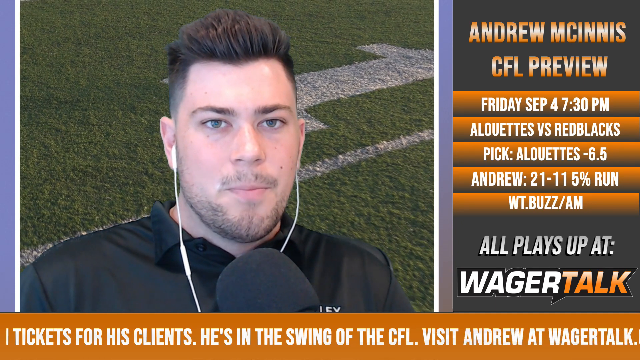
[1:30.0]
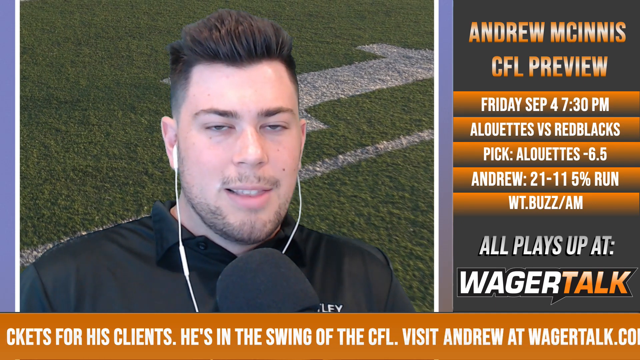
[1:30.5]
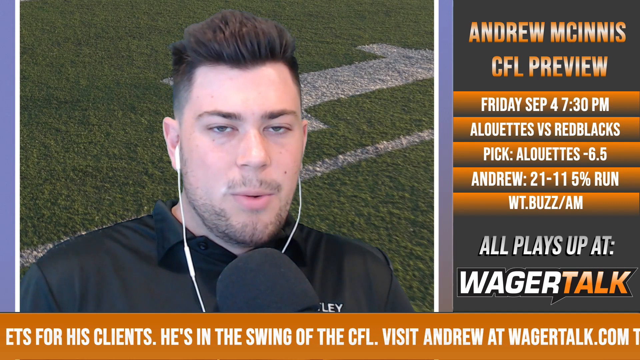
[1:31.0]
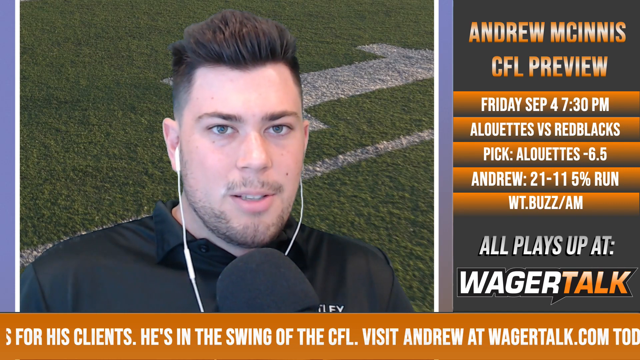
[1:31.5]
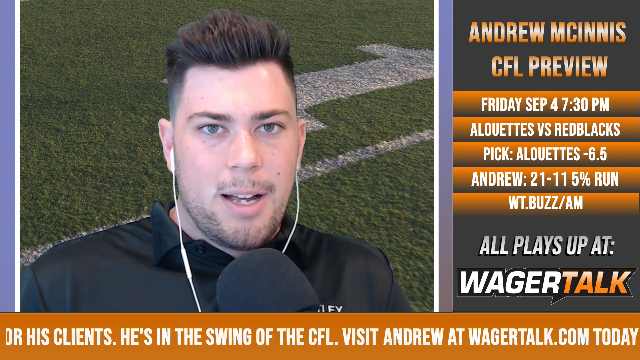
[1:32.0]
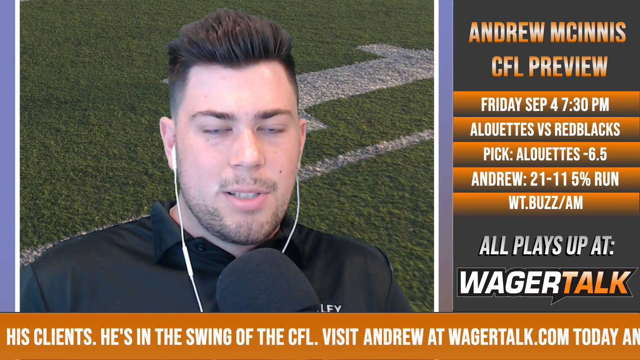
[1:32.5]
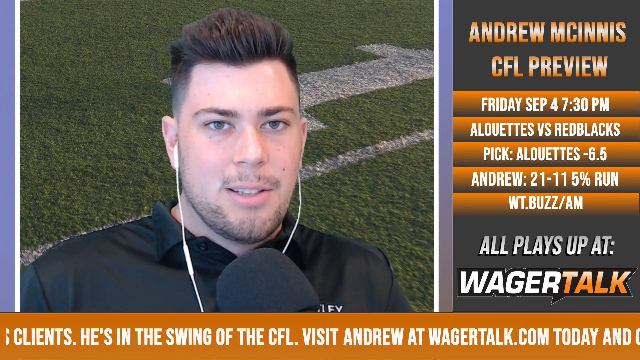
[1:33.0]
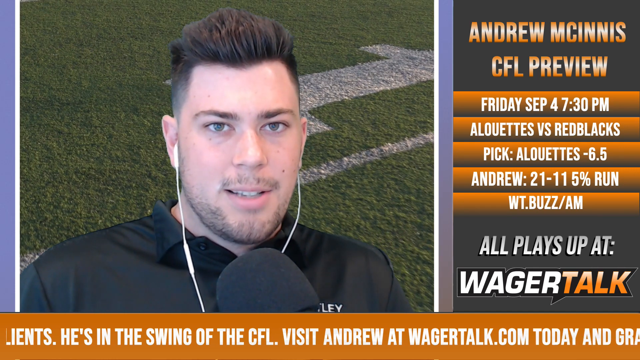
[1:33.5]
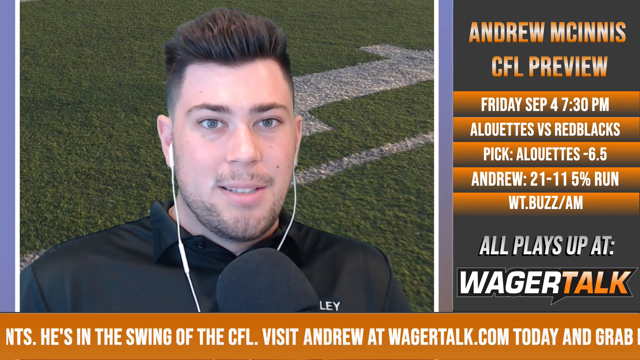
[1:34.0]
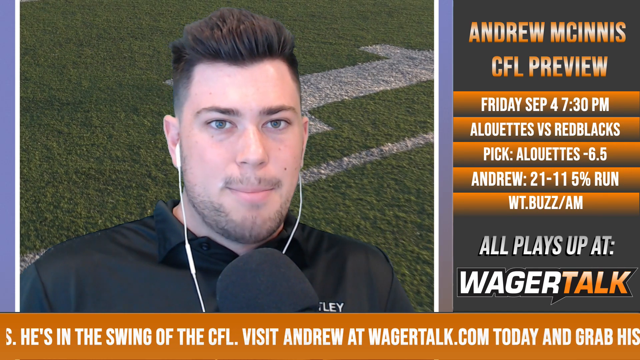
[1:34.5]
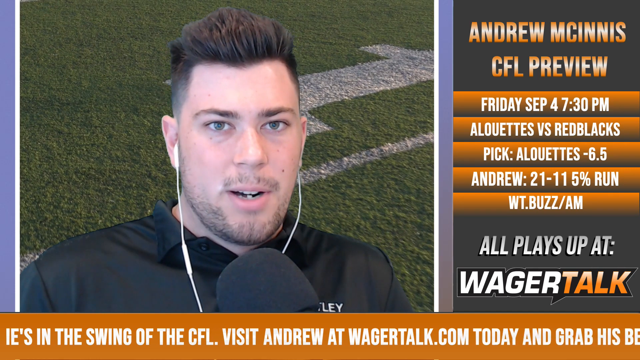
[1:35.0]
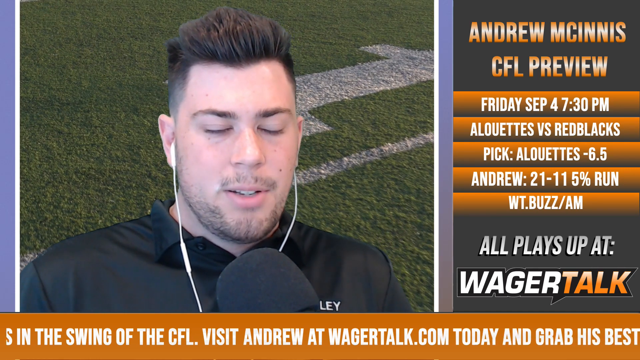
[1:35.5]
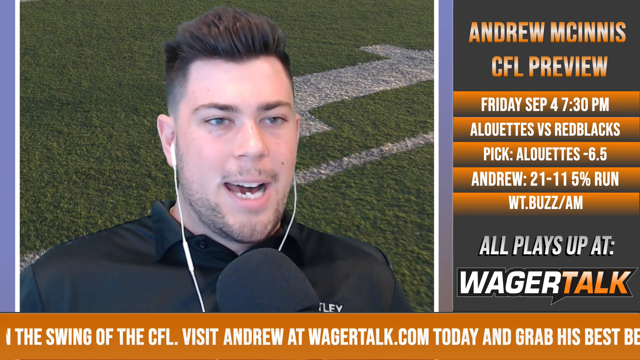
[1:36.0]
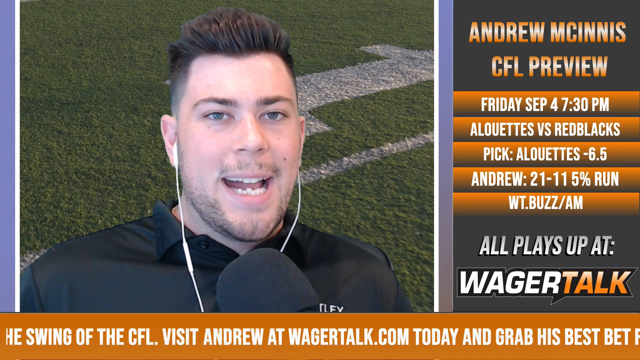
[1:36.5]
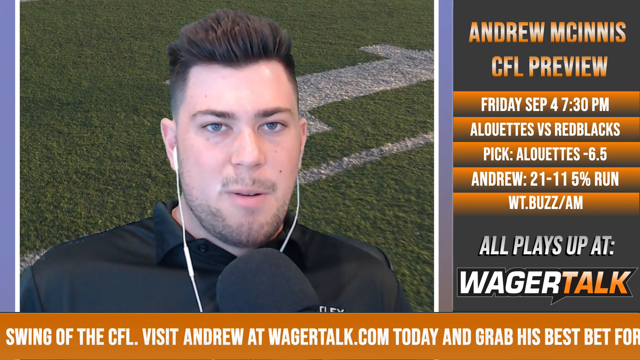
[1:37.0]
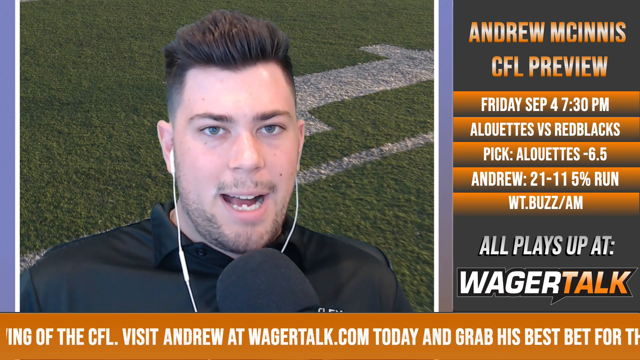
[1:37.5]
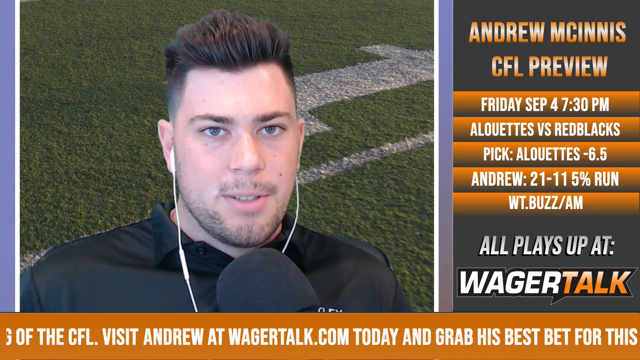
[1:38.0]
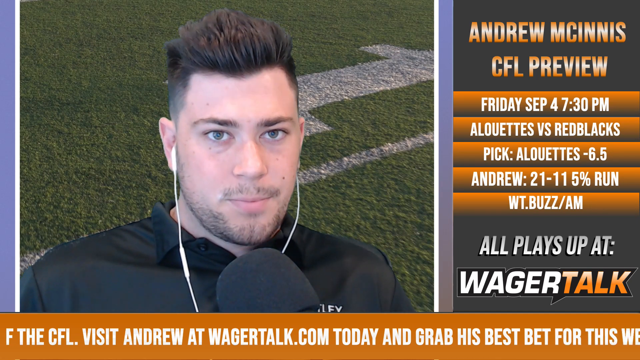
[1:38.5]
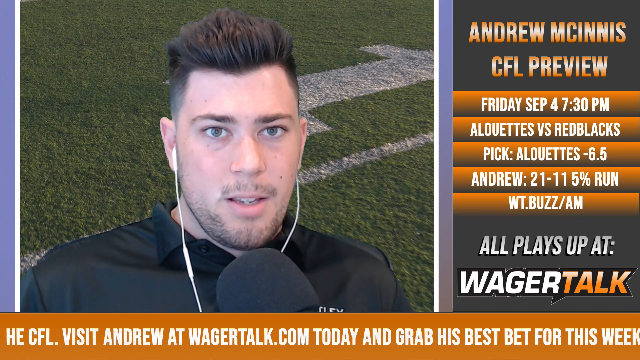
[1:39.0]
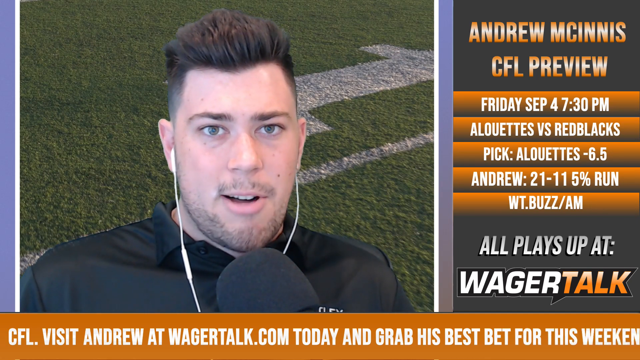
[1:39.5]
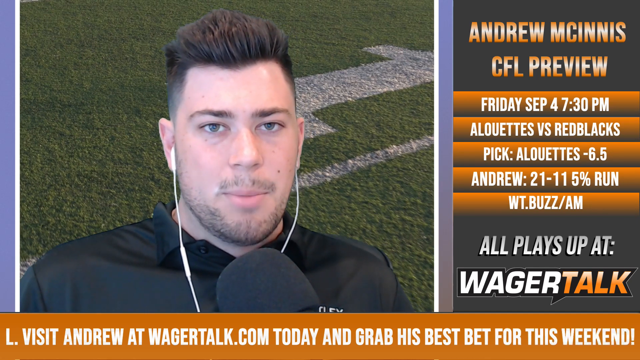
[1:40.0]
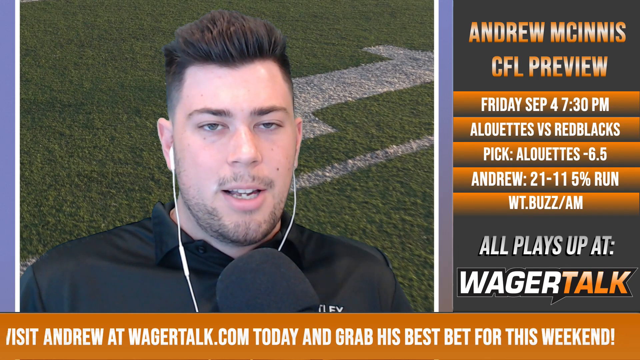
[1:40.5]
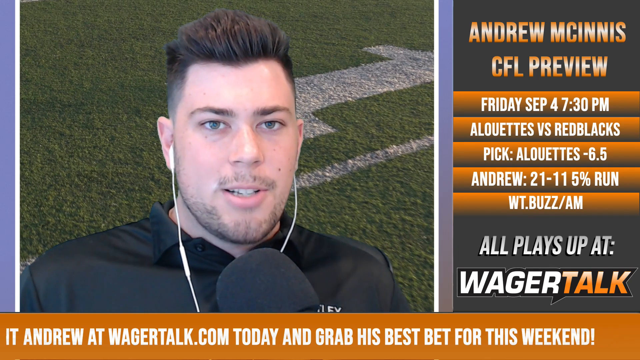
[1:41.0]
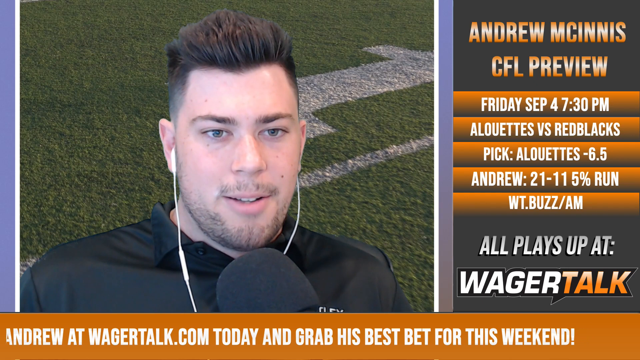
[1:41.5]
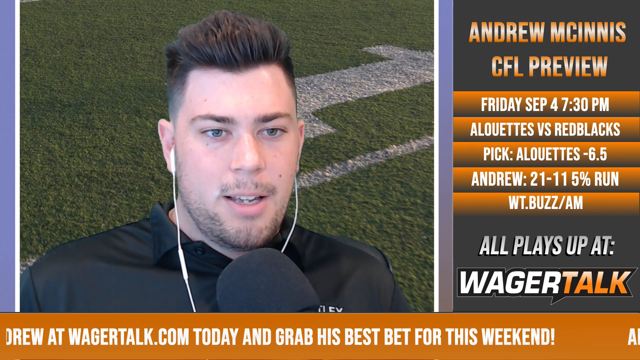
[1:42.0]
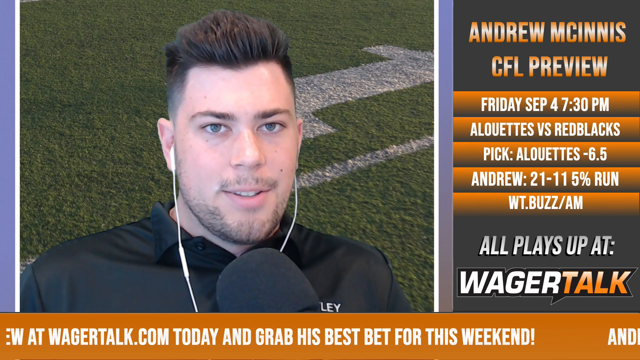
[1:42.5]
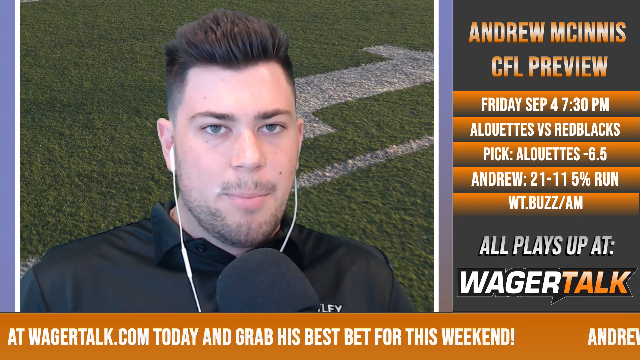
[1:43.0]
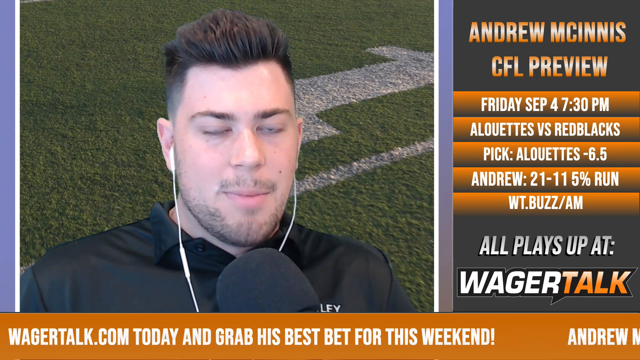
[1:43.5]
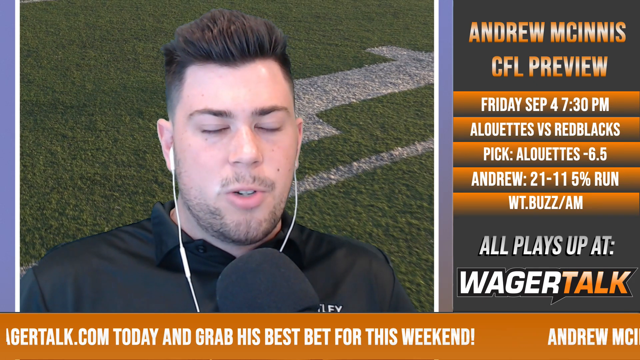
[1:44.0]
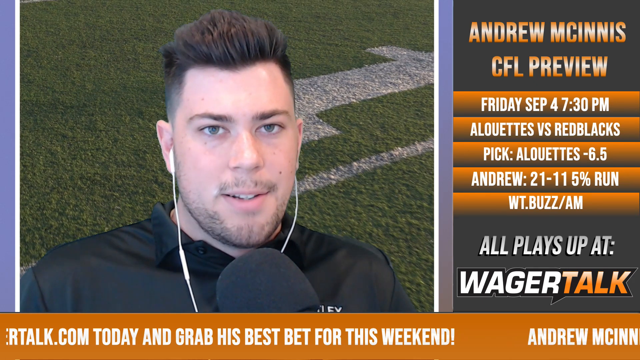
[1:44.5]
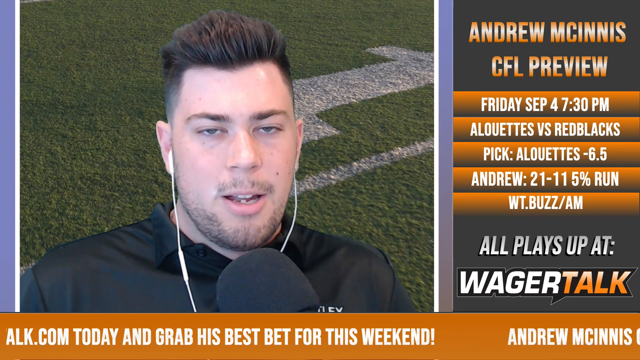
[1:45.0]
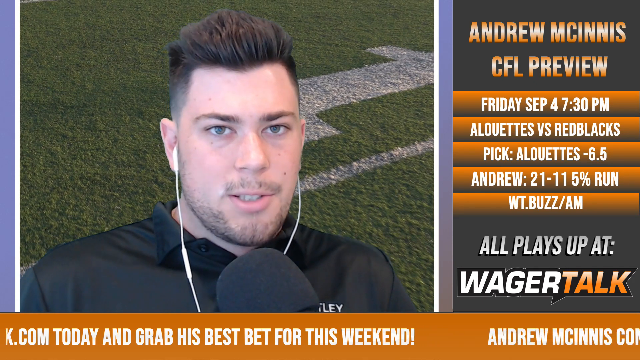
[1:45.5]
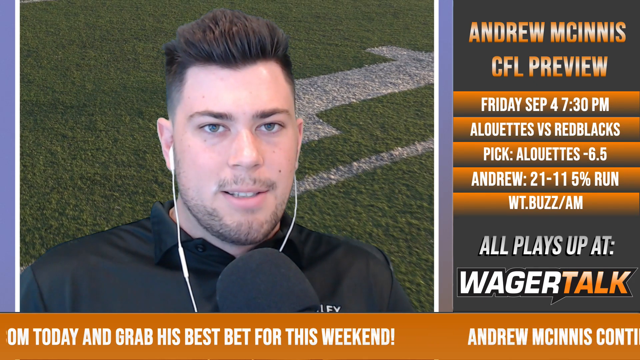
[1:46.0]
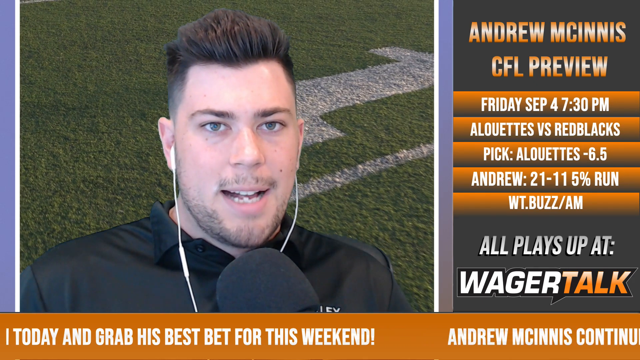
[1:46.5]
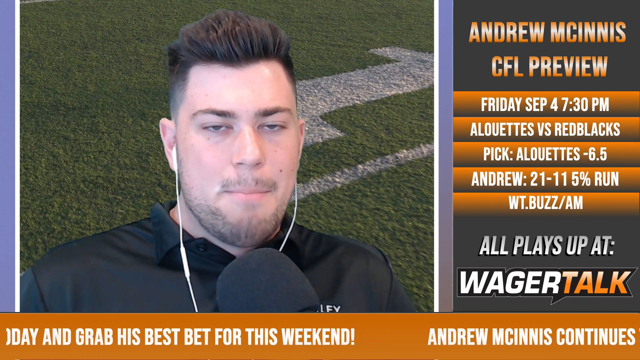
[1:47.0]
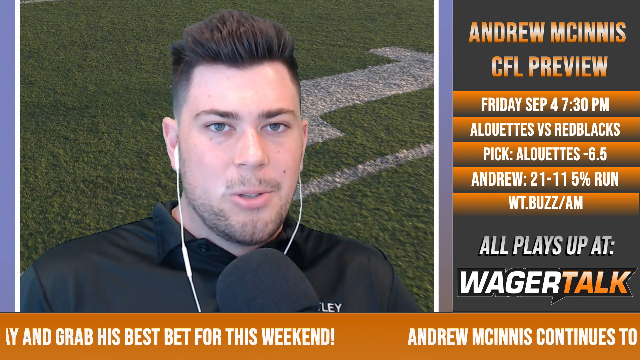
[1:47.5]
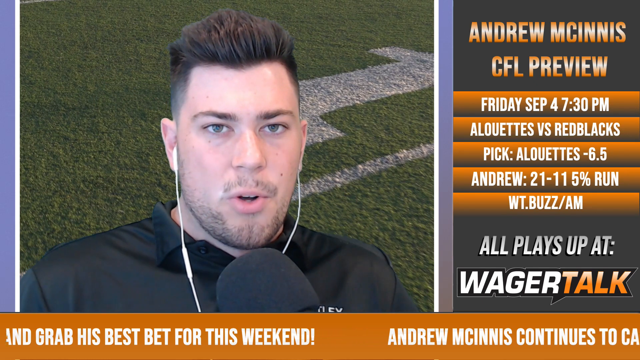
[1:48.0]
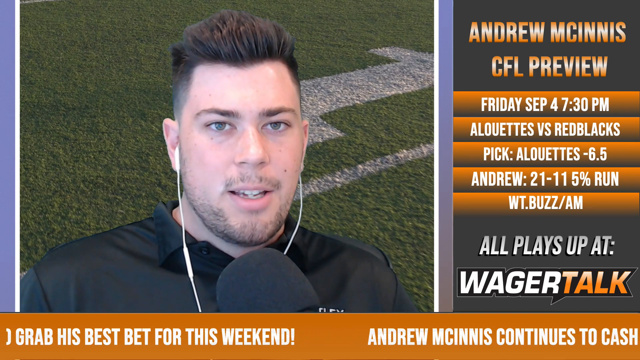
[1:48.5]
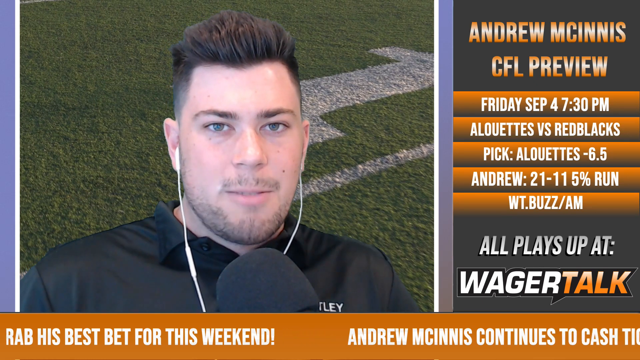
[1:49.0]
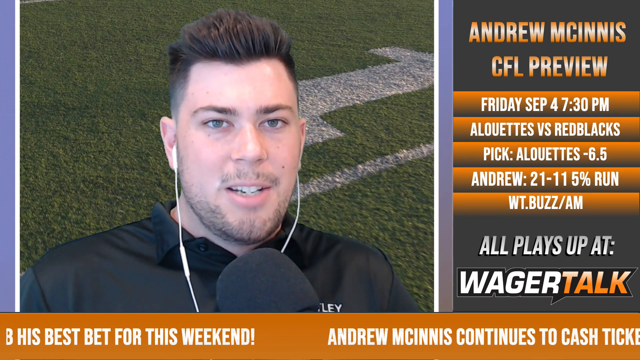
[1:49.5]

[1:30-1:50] The man being interviewed and talking on screen is apparently Andrew McInnis, since this is his CFL preview. His hair is very short, brown and straight on the sides, and he appears to have a bit of a cowlick: his hair is styled sticking straight up and kind of pushed to the back, with some of the back hair poking out towards the left in an odd way. Behind him is football grass that appears a muted, dull green, possibly real grass rather than artificial turf, with a texture that looks bumpy and rough. It looks to be around the 10 yard line, with a white line painted behind him and the number one on the field. The background is superimposed rather than an actual field; it looks like a video screen because it keeps jumping.